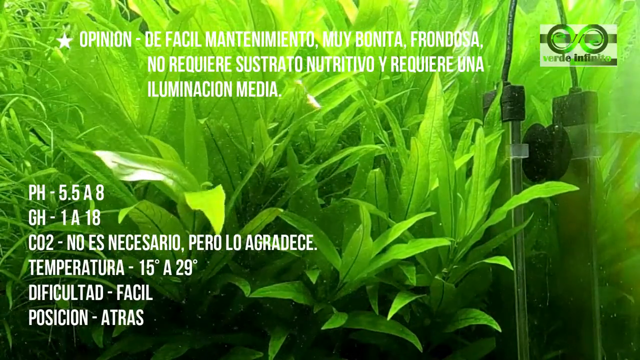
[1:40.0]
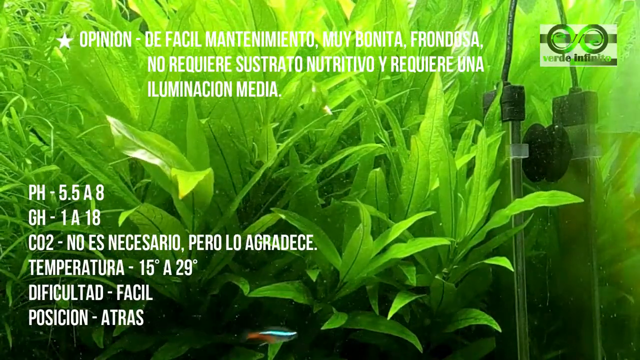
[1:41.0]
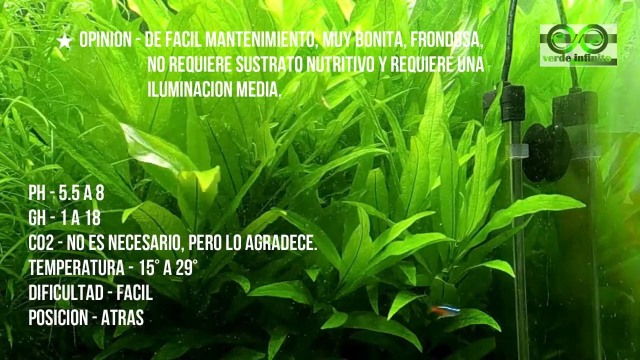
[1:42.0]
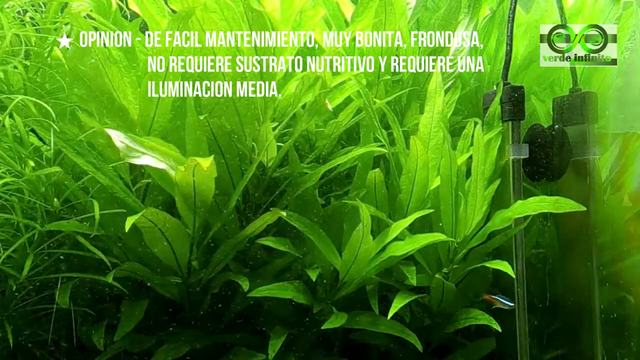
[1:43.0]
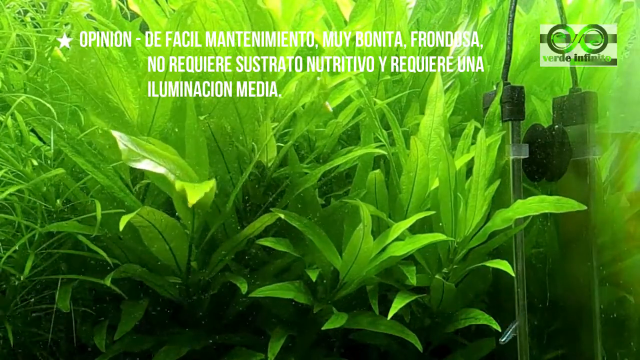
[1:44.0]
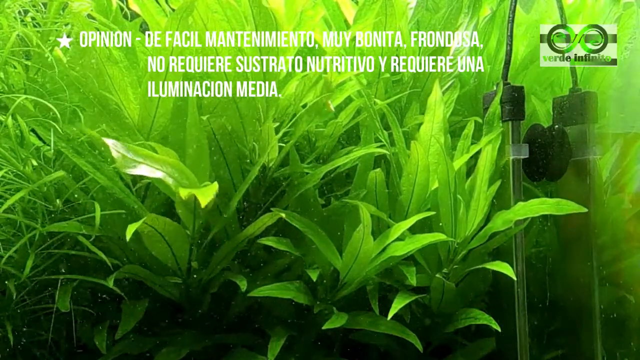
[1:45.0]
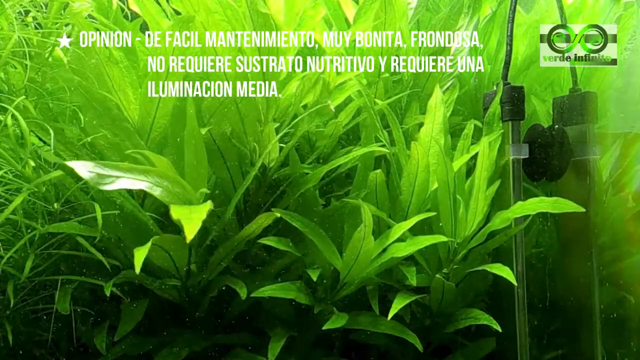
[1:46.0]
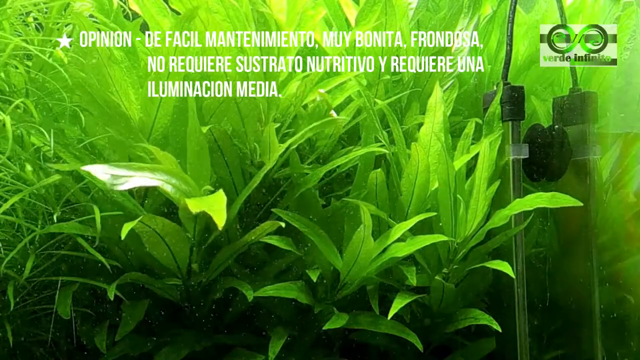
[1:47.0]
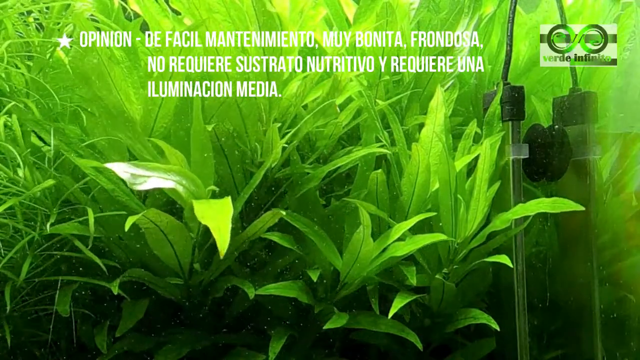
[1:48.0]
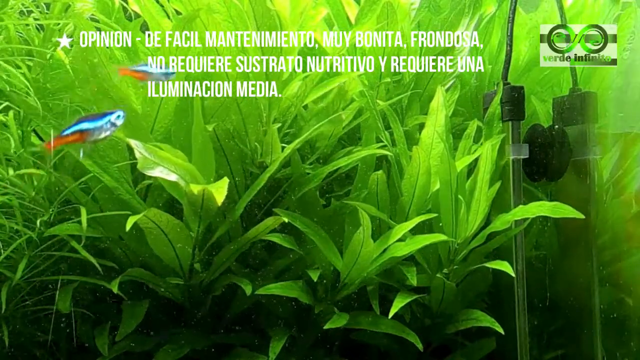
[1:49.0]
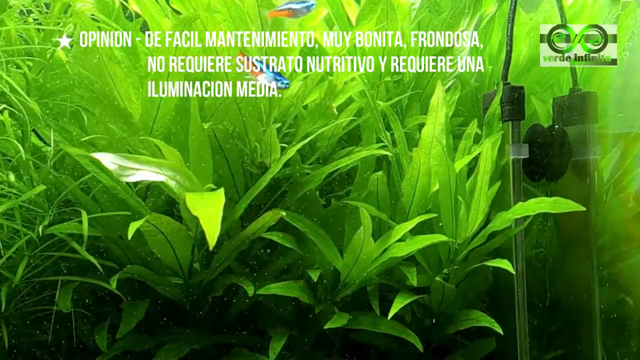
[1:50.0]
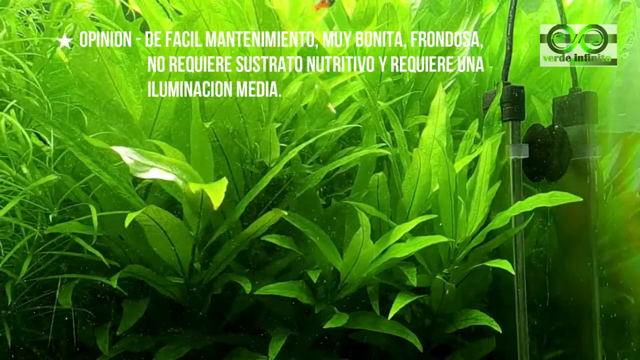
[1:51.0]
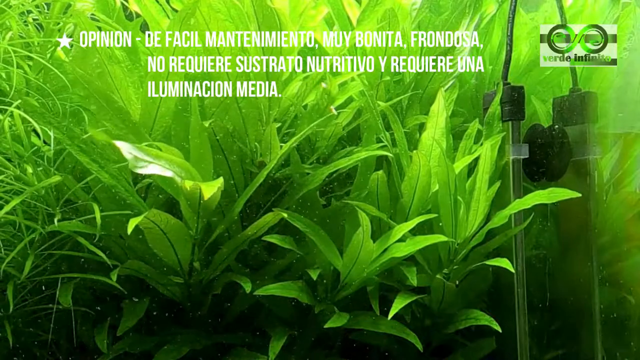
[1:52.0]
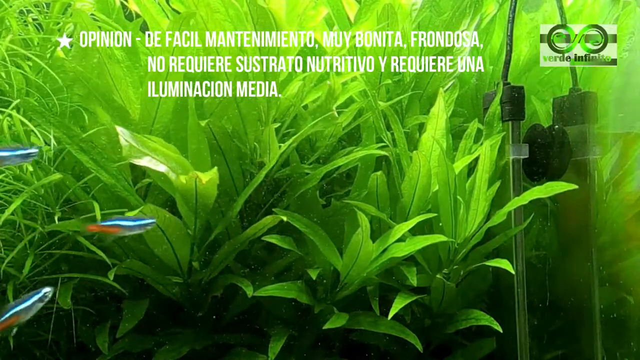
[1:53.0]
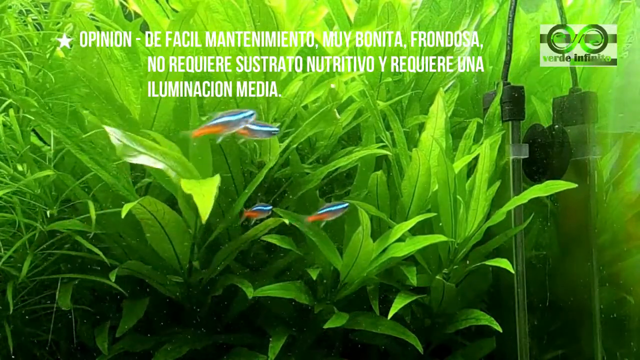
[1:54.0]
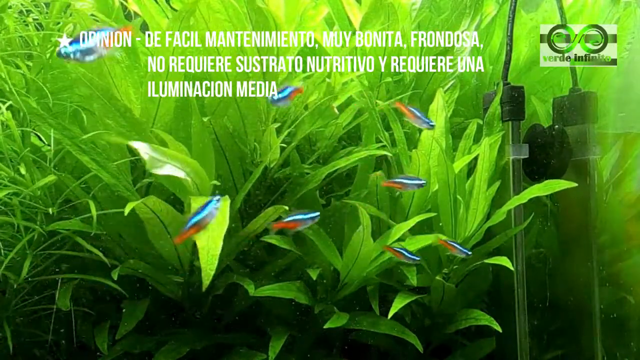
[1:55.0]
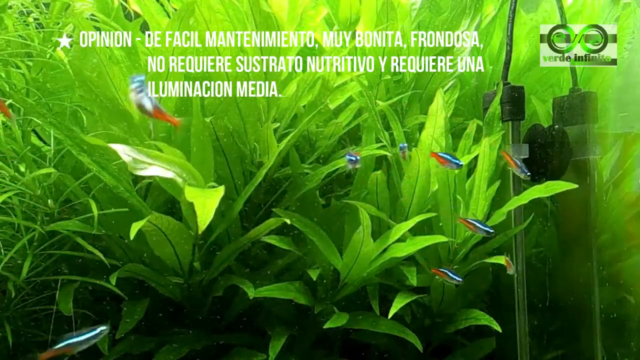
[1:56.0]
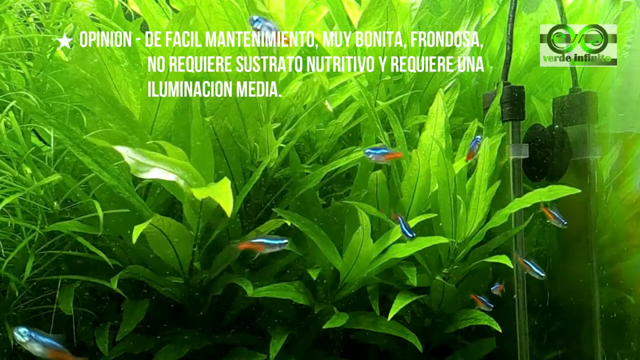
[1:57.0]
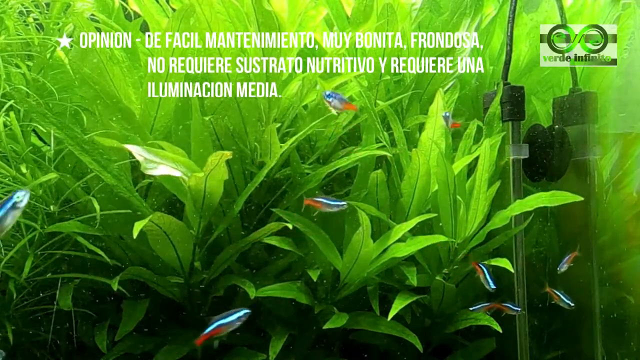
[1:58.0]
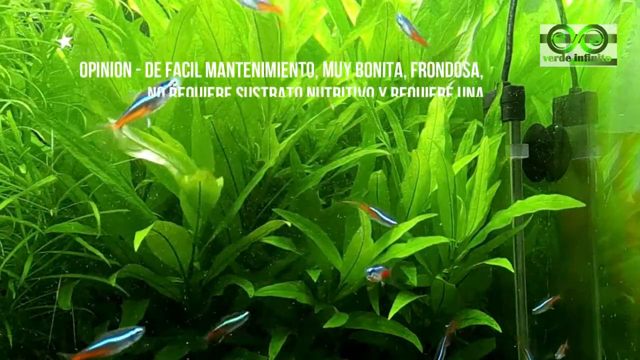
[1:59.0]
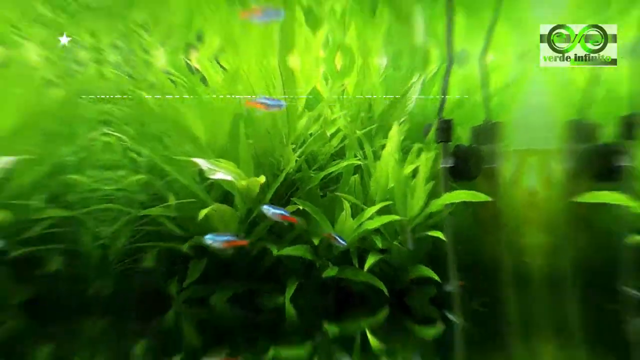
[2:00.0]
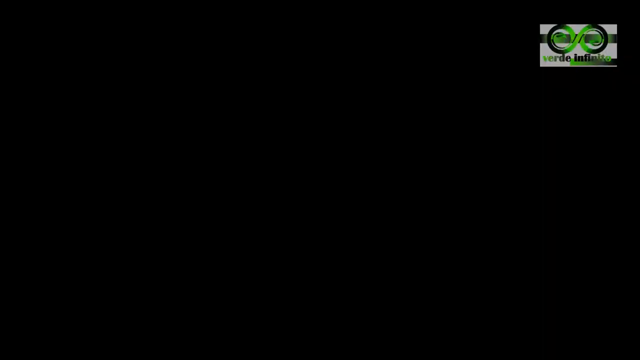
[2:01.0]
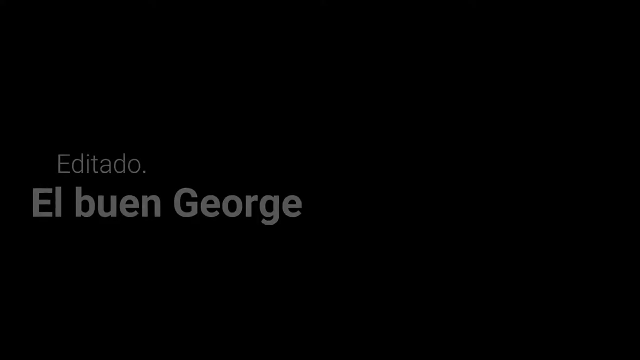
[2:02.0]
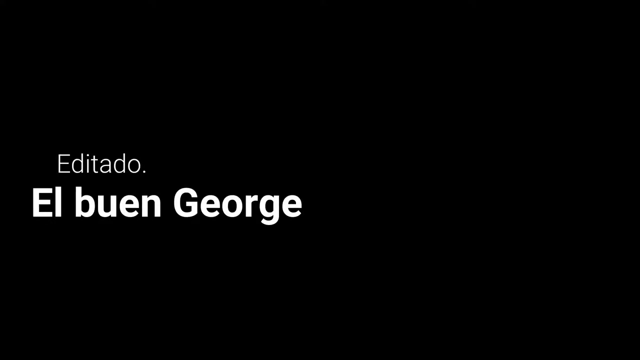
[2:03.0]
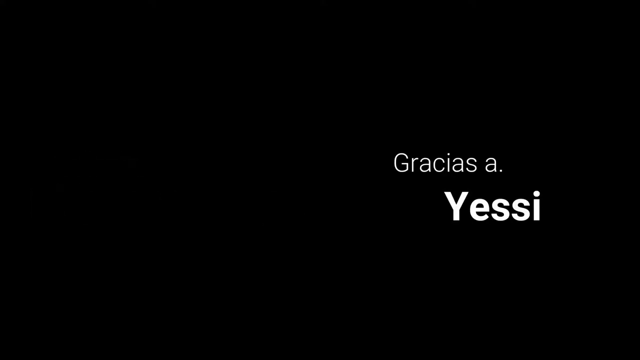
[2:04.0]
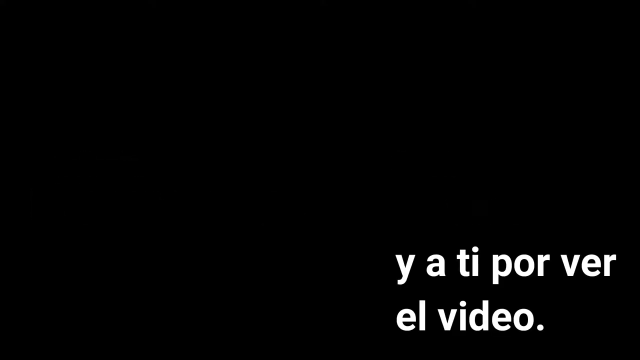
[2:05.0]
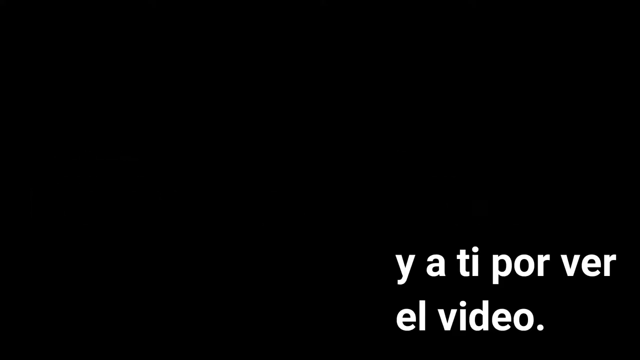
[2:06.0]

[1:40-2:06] The fish tank, apparently of the brand Verde Infinitivo, is full of lush green plant life that moves slowly in the water, including some larger leaves and some grass-like plants. White text at the top of the screen gives an opinion in Spanish that the tanks are easy to maintain and very beautiful, and at the bottom left are statistics about the tank, including pH level, CO2 levels, temperature and other measurements. A number of small fish then enter the screen. Initially there are two, sort of light blue with an orange tail, moving quickly from the left to the right of the screen; then four more appear, then another four or five, probably about ten to twelve or more in total, coming from the left of the screen and swimming quickly around the tank, darting from side to side. The view then zooms out of the tank to a black screen with white text thanking people in Spanish for watching the video.